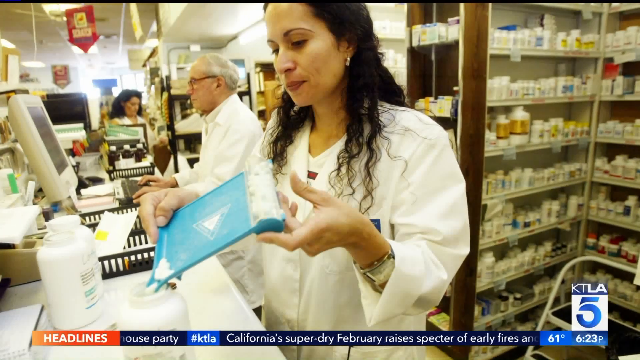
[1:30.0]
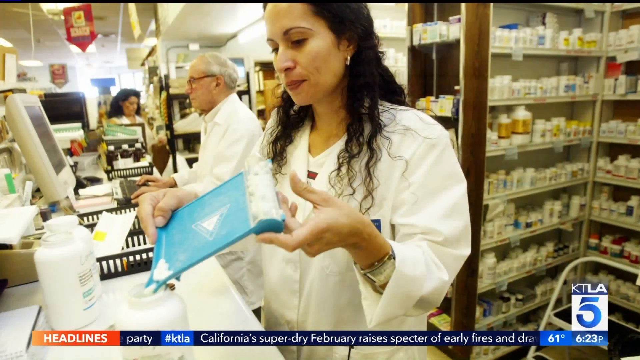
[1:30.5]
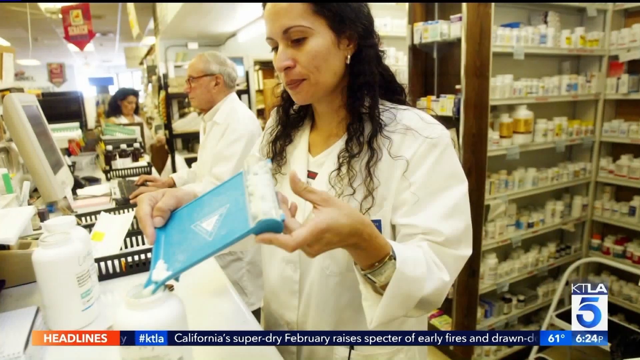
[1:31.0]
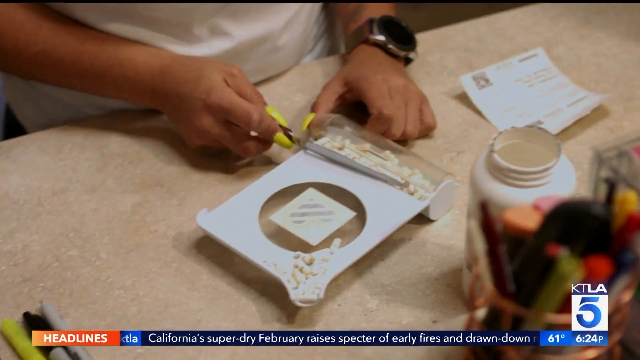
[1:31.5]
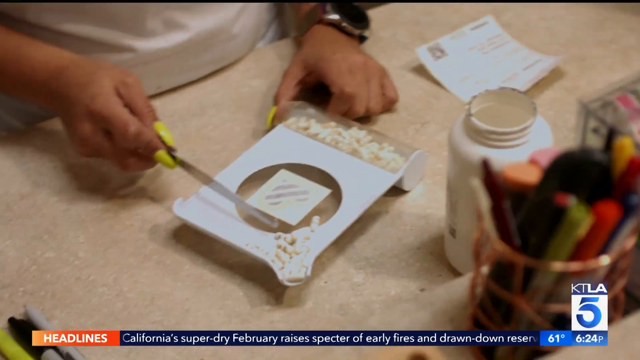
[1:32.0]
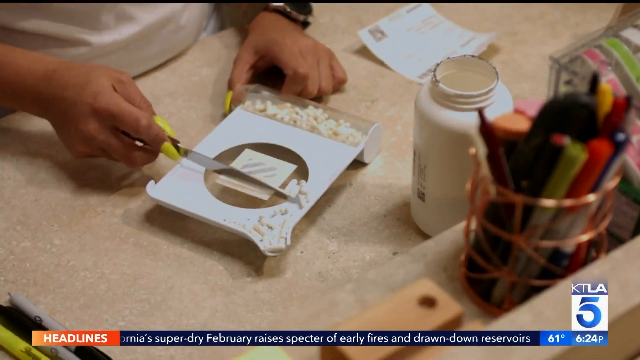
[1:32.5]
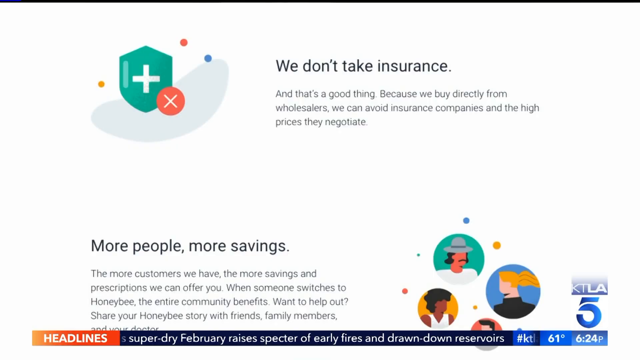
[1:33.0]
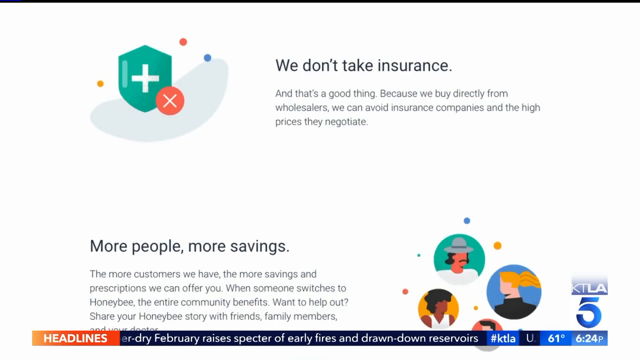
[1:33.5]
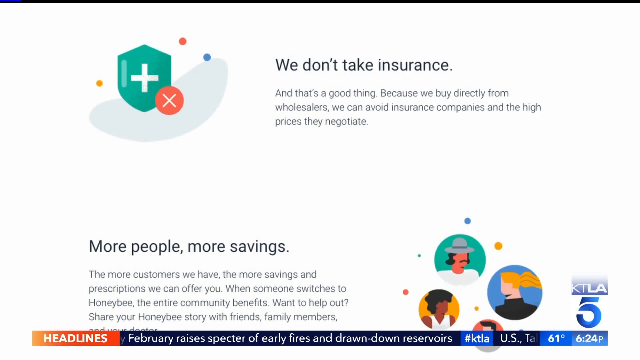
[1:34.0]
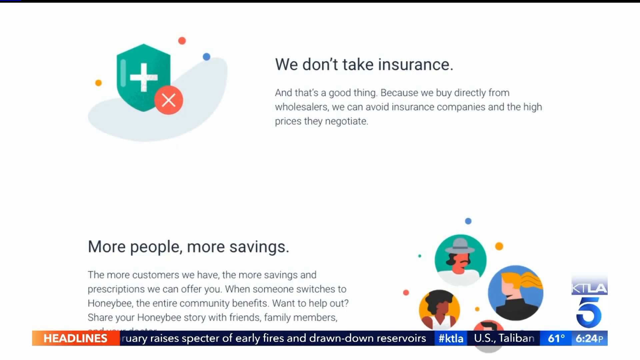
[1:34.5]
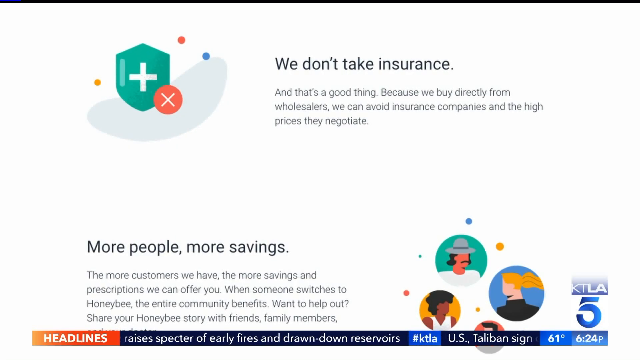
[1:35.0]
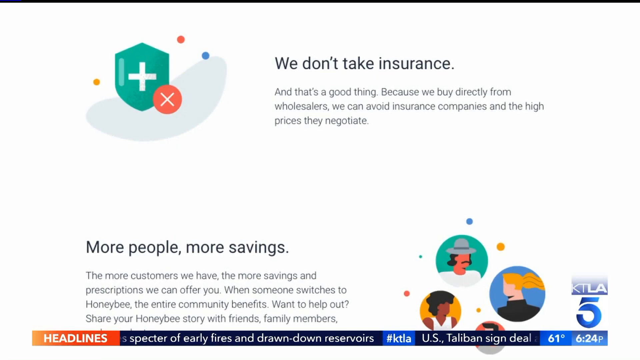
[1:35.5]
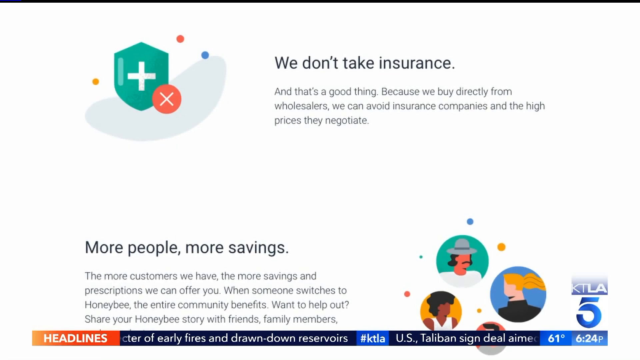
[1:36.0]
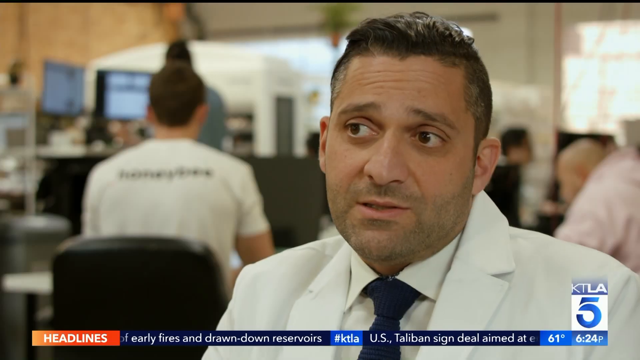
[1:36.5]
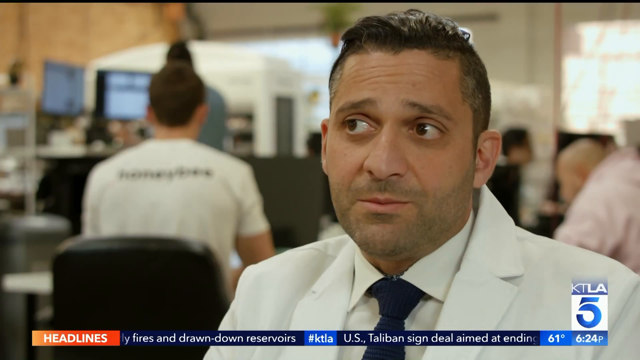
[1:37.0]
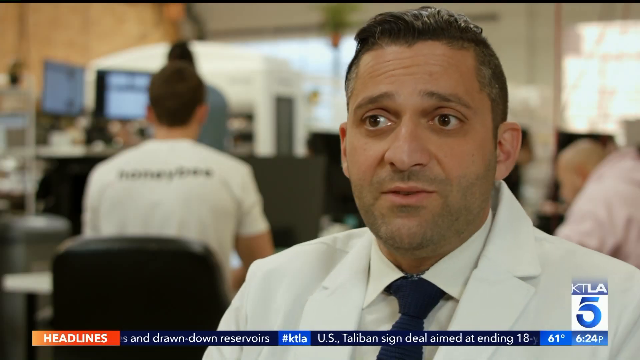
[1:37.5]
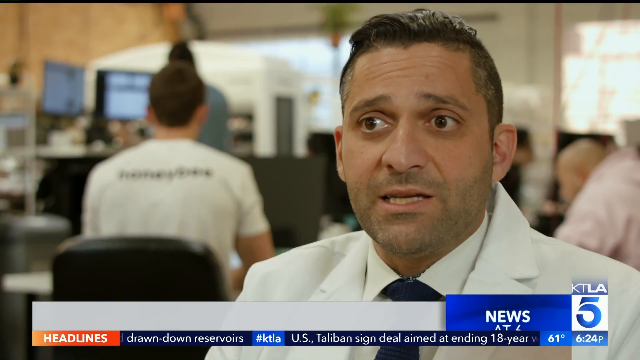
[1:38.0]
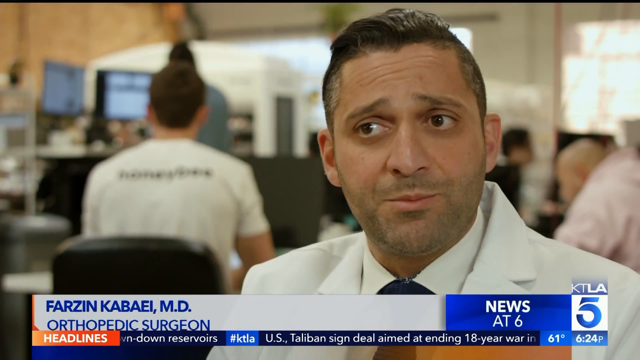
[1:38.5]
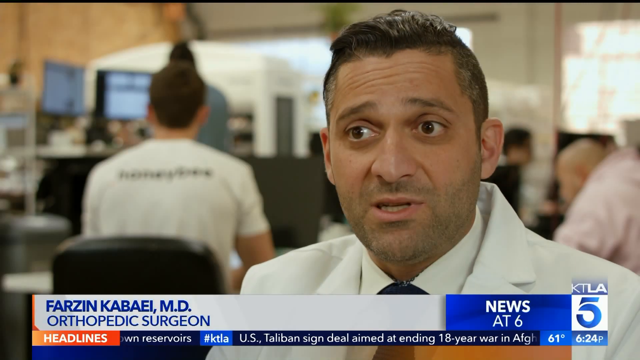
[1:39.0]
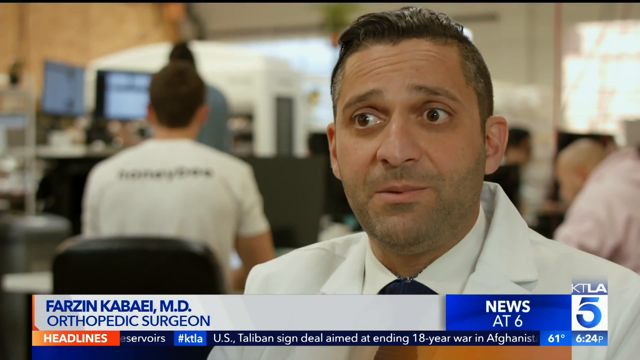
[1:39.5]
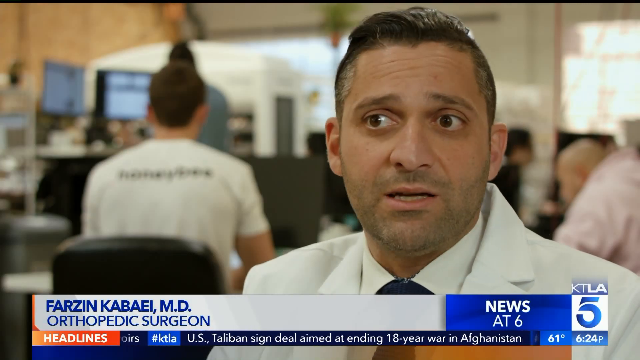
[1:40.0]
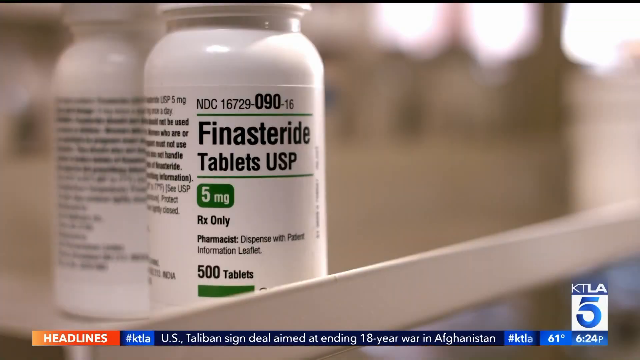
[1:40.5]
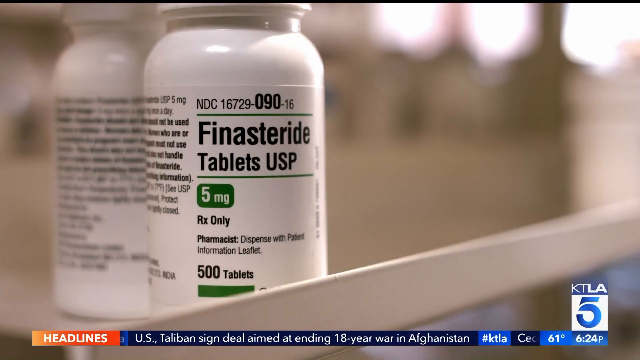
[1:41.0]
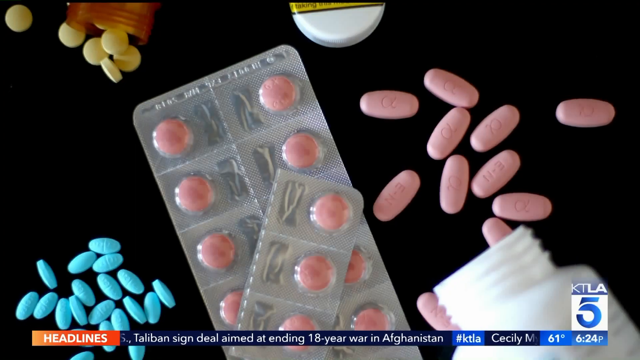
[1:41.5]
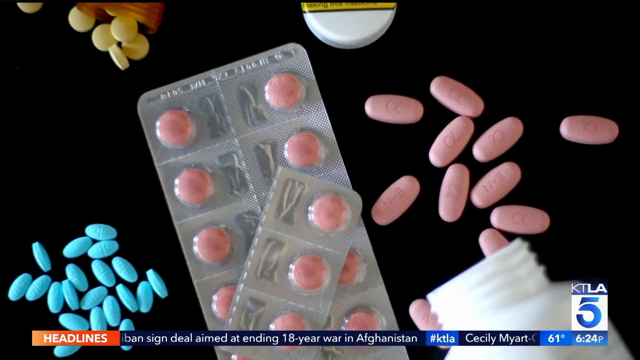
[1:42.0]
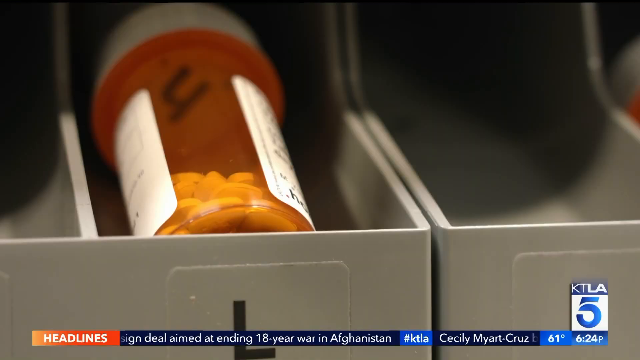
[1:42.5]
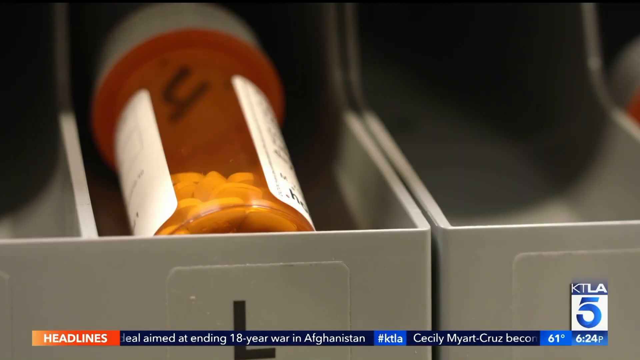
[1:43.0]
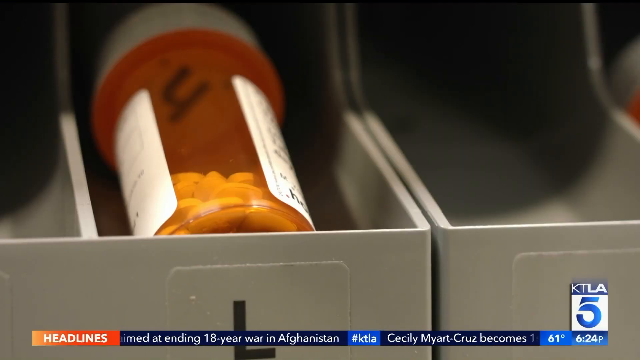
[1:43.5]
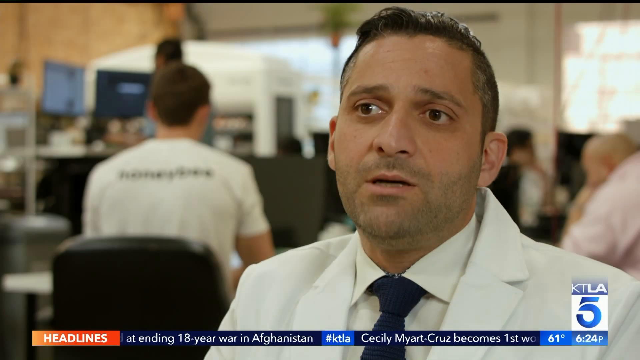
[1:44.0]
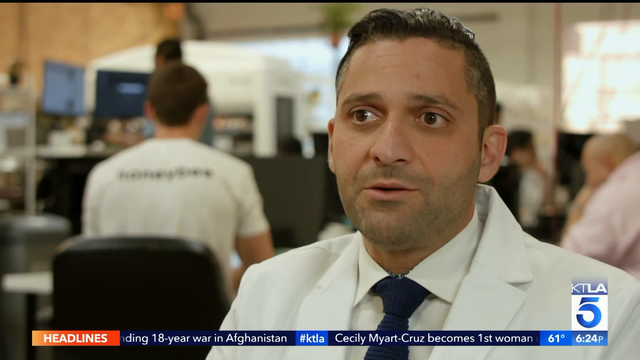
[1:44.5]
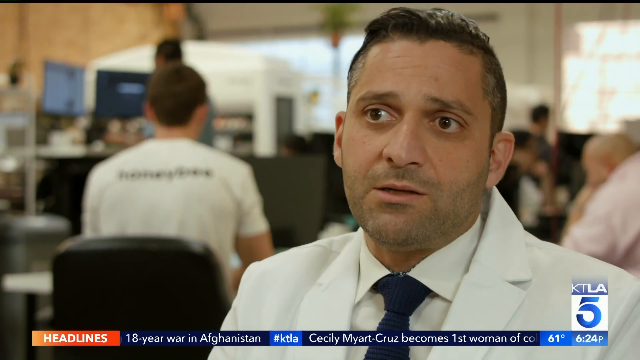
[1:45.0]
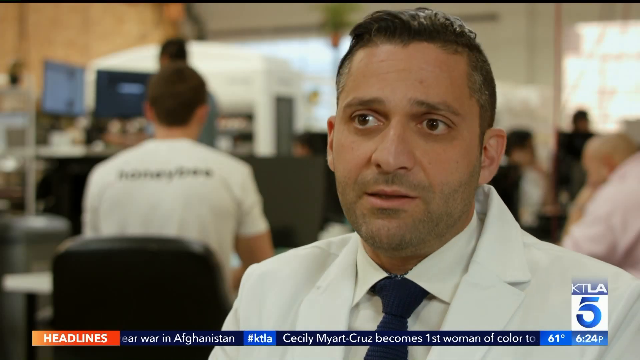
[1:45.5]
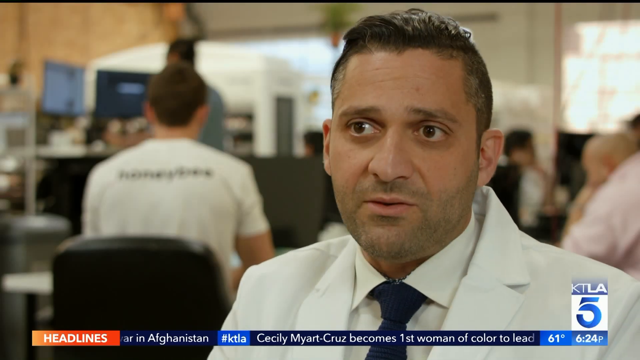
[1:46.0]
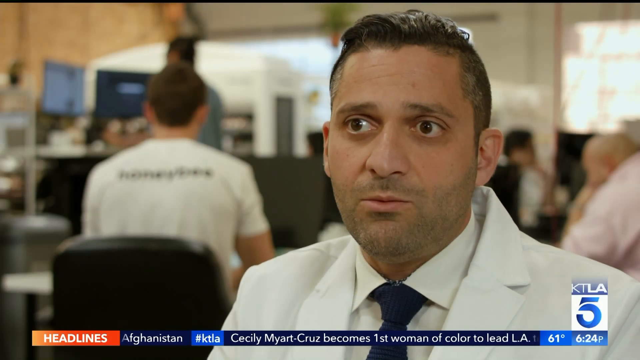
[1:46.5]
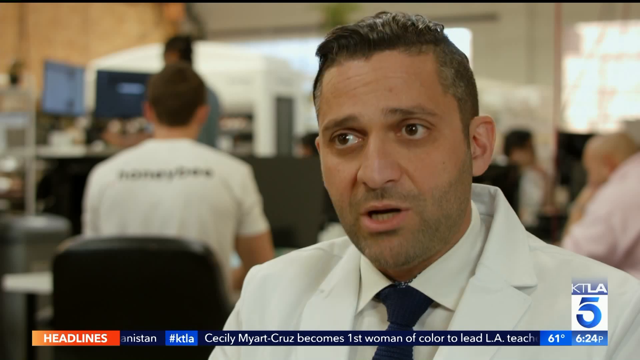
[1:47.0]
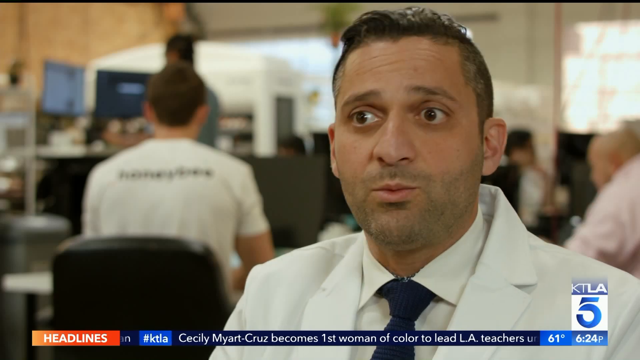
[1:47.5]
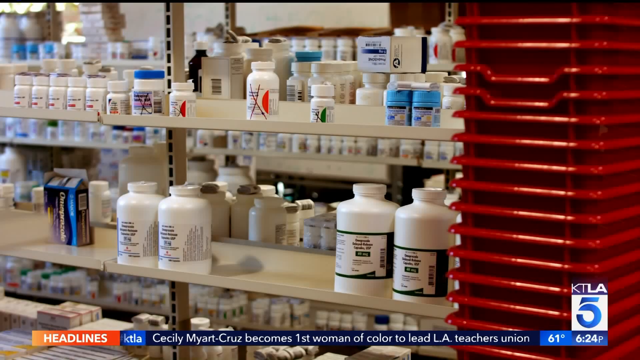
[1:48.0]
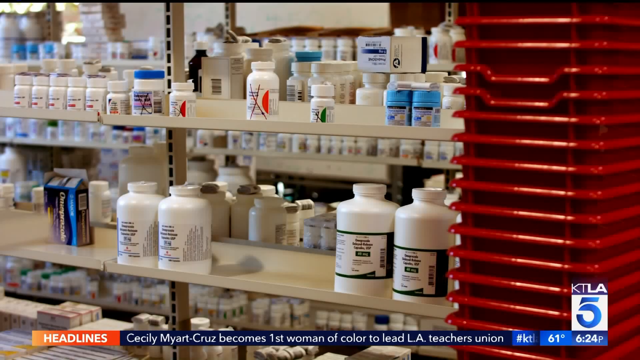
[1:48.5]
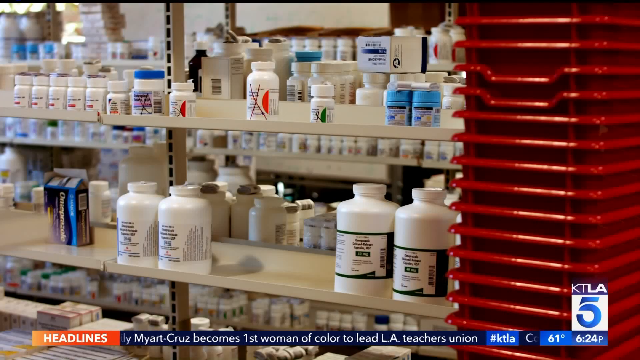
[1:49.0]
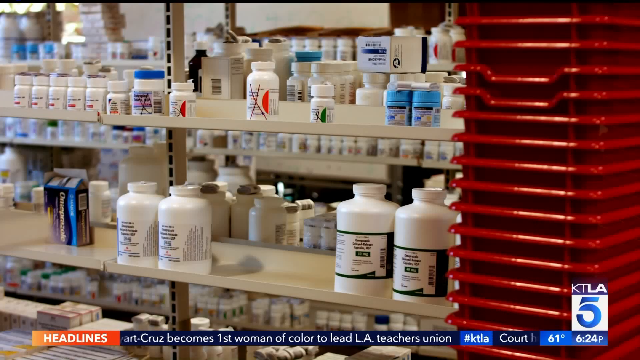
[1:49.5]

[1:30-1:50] A female pharmacist scans or pours something off a blue square object, with white pills in its corner. To her left is a much older male pharmacist with white hair and glasses. Both wear white lab coats, with a huge shelf of prescriptions behind them and a step stool at the bottom right. People are then shown counting pills. A website screenshot follows, with text including "insurance and that's a good thing because we buy directly from wholesalers", "we can avoid insurance companies and the high prices that they negotiate. More people, more savings. The more customers we have, the more savings and prescriptions we can offer you. When someone switches to Honeybee, the entire community benefits" and "Share your Honeybee story with friends and family members." A male pharmacist in a white coat then appears with a white 500-tablet bottle labeled Finasteride tablet, 5mg, Rx only.